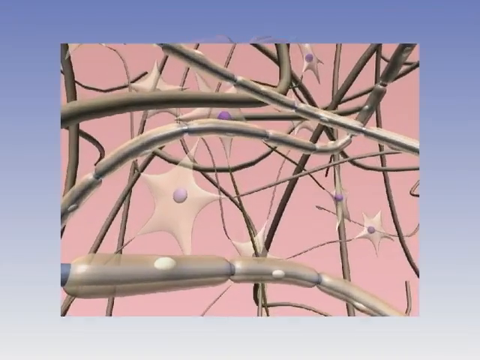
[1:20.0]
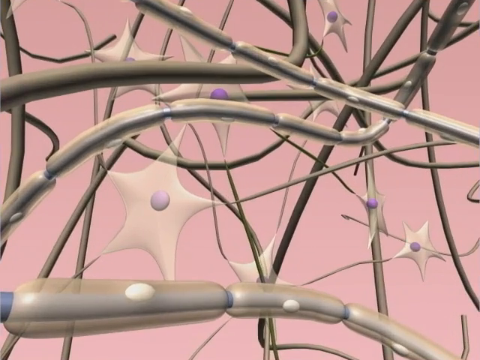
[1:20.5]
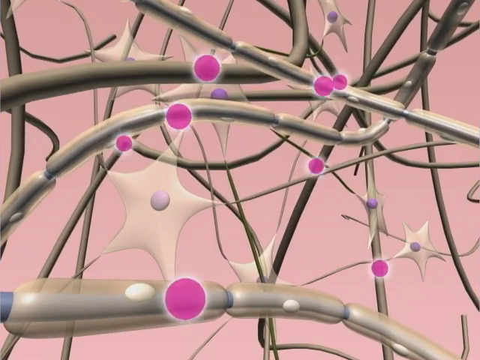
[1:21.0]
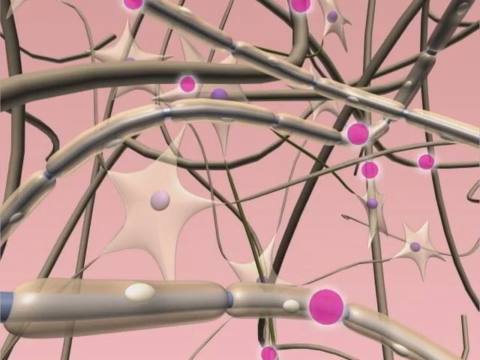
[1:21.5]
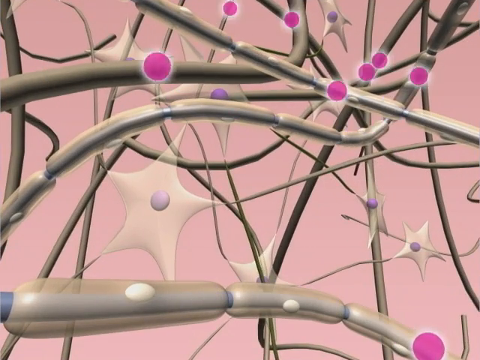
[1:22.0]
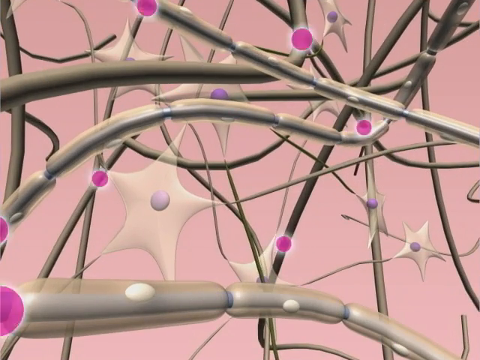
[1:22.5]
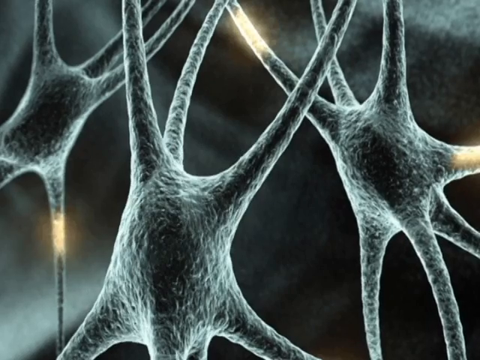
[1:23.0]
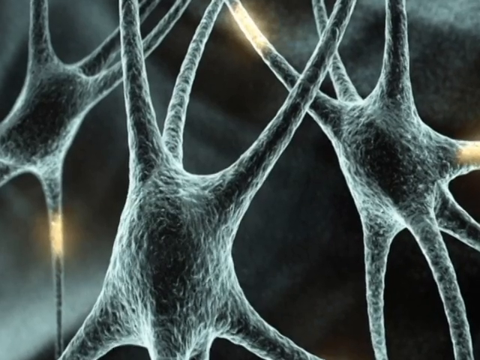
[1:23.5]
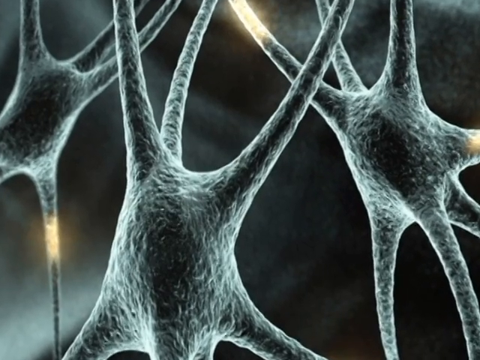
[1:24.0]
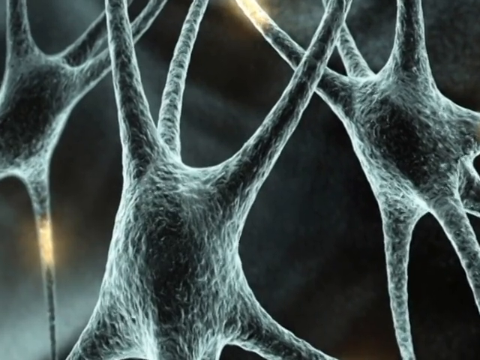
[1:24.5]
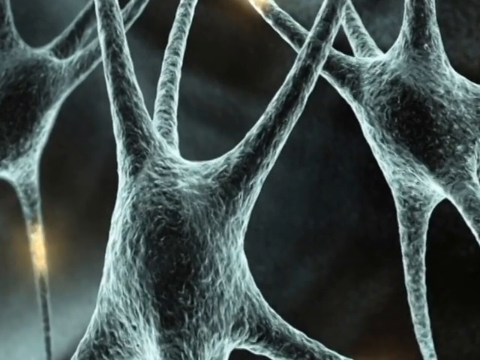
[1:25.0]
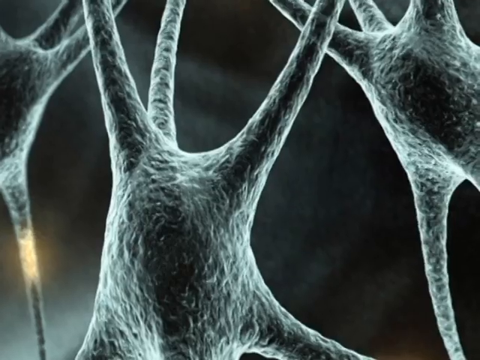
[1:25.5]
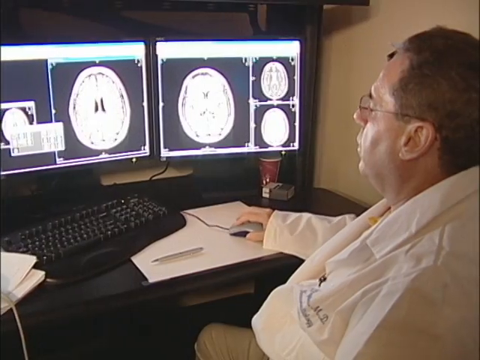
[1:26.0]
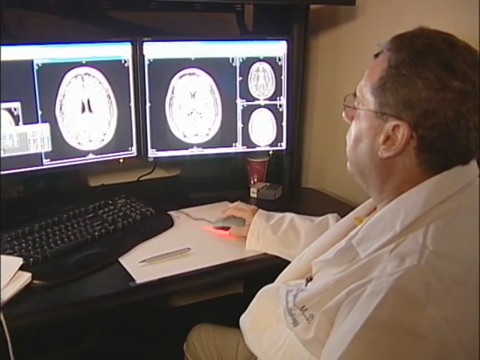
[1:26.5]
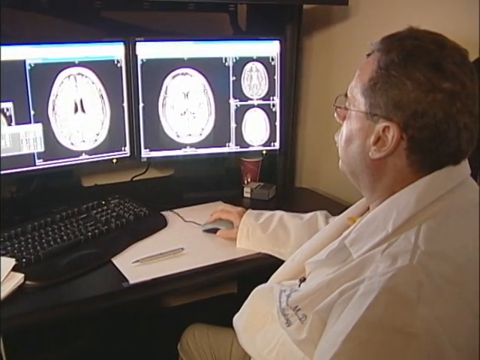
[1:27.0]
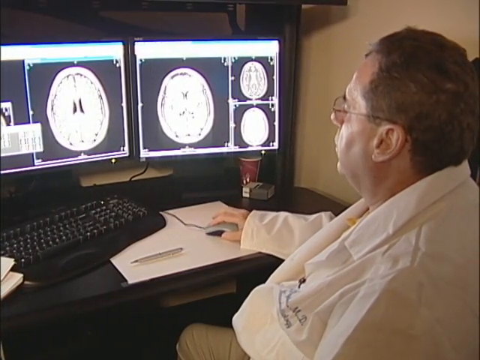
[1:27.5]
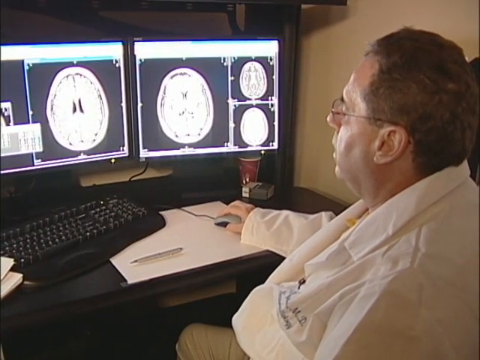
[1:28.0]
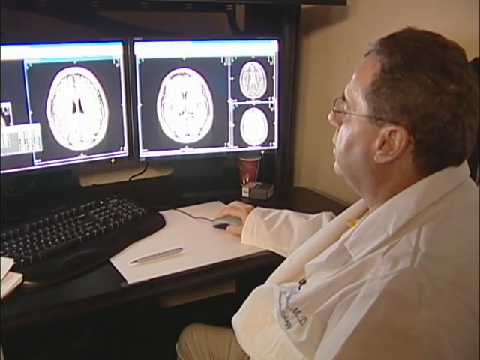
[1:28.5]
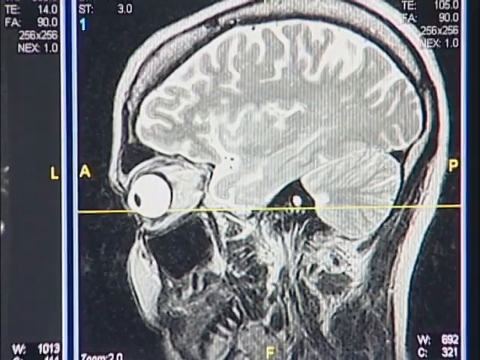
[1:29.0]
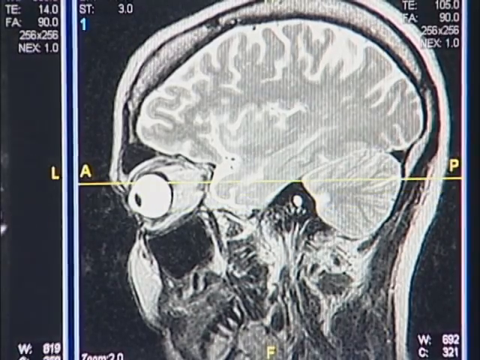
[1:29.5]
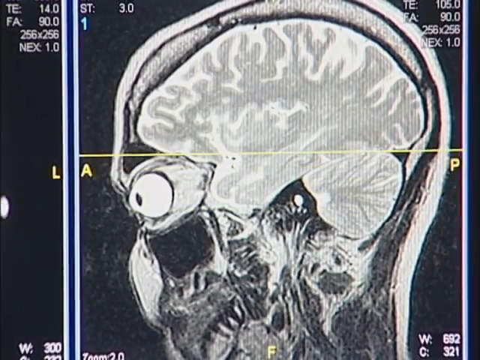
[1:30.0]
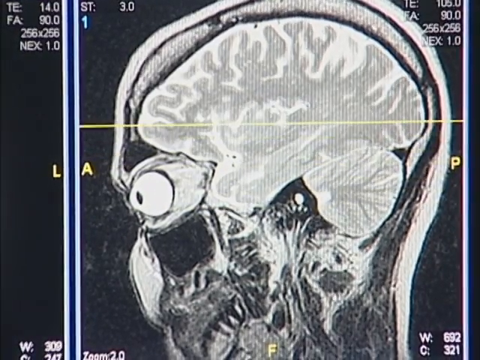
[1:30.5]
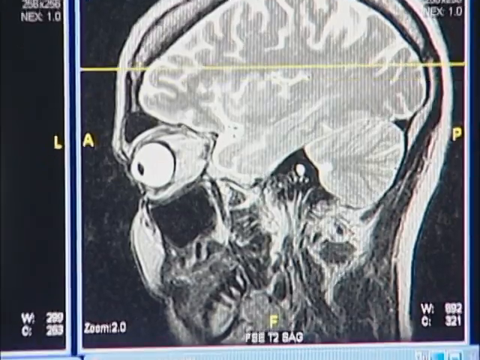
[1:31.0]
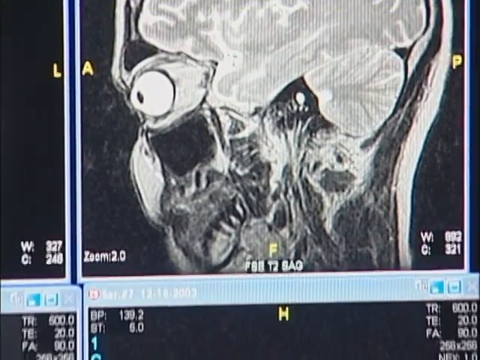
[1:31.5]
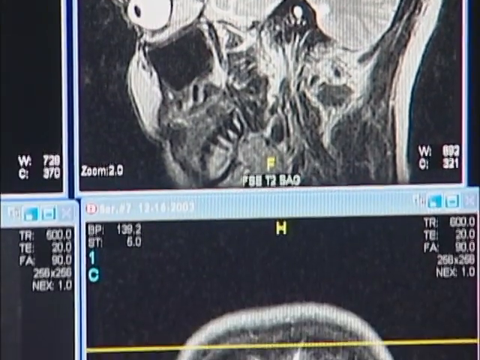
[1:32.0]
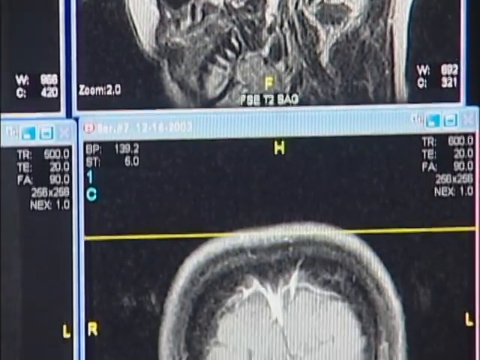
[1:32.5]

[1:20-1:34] A diagram or picture shows cells like star shapes with connecting strands, and wider grey strands like sausages. The star-like shapes have small lilac circles in the centre and form a network, and pink circles travel through the structure. A black and white image follows of similar star-shaped elements with long connecting strands at the points of the star. Next, a doctor sits at his desk in front of a laptop with multiple screens, looking at brain x-rays, and moves his mouse in circles, showing different areas of the x-rays. A close-up of a brain shows a moving white or yellow line travelling through the centre of the image.